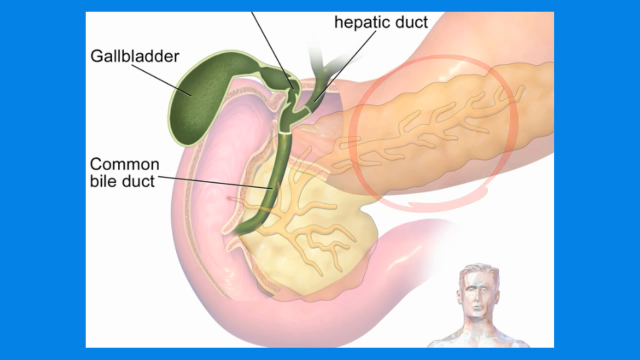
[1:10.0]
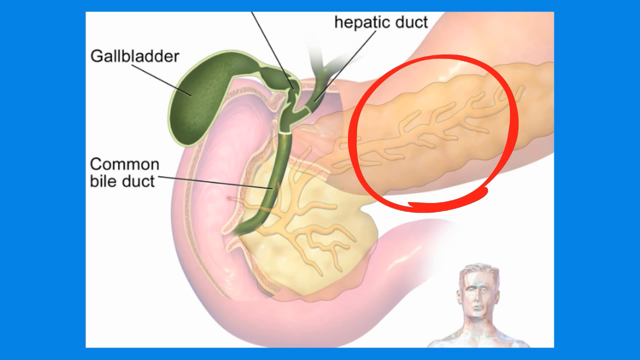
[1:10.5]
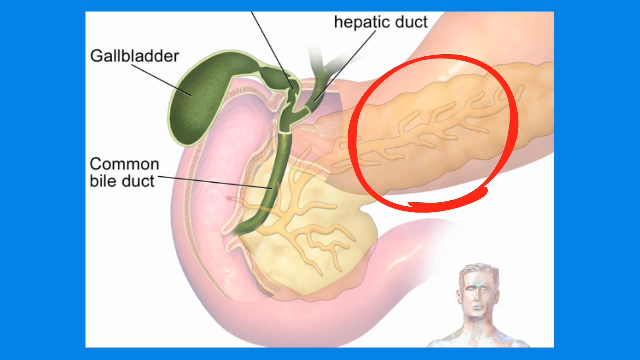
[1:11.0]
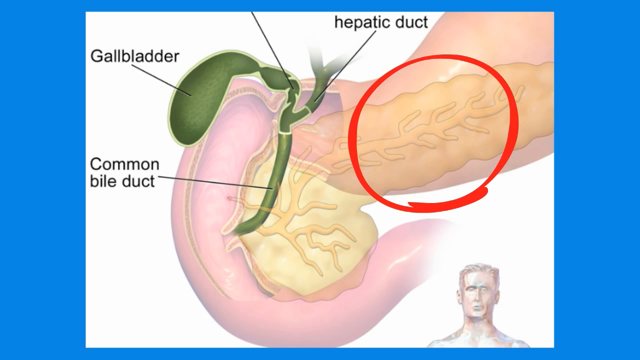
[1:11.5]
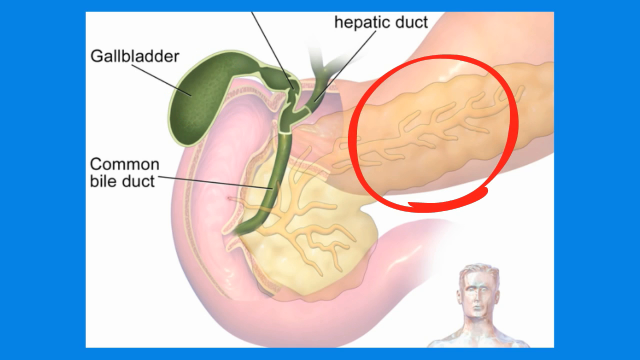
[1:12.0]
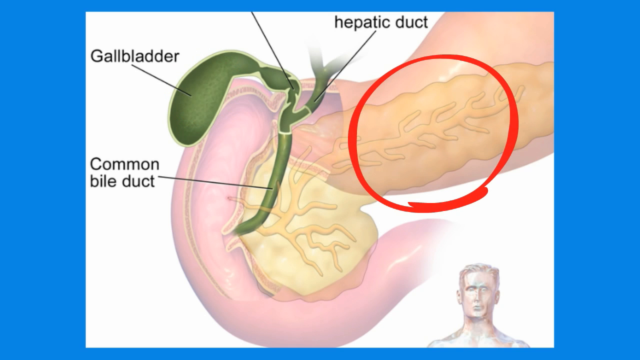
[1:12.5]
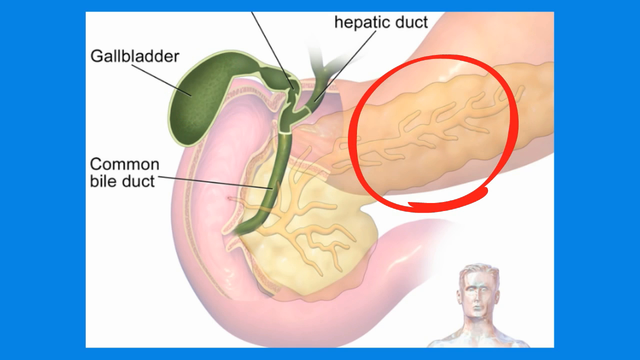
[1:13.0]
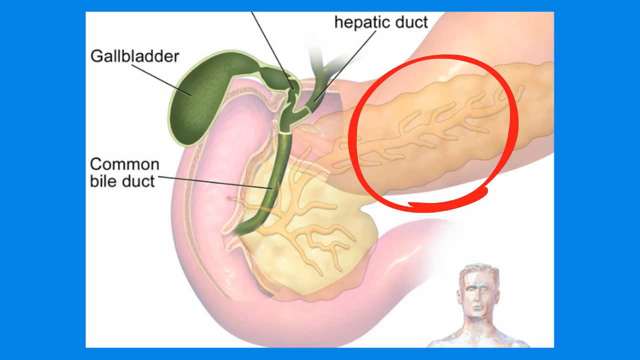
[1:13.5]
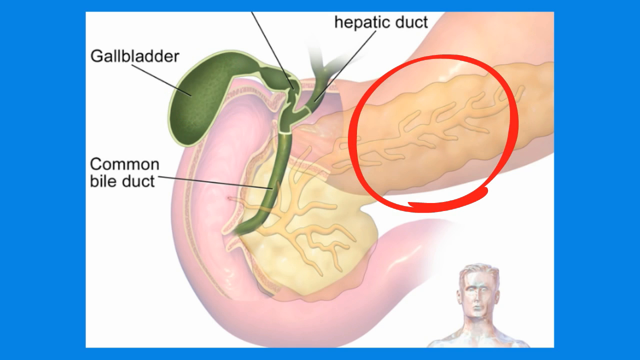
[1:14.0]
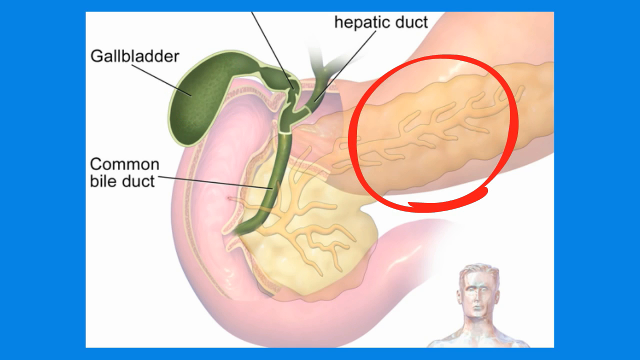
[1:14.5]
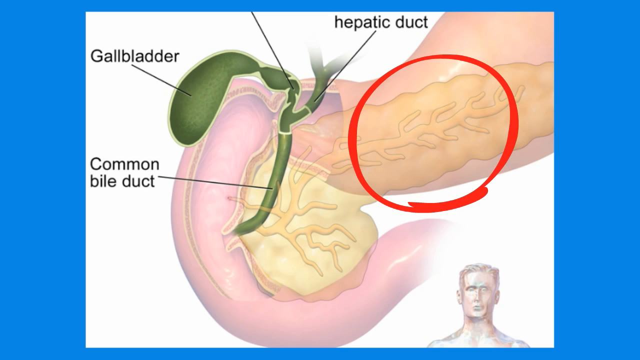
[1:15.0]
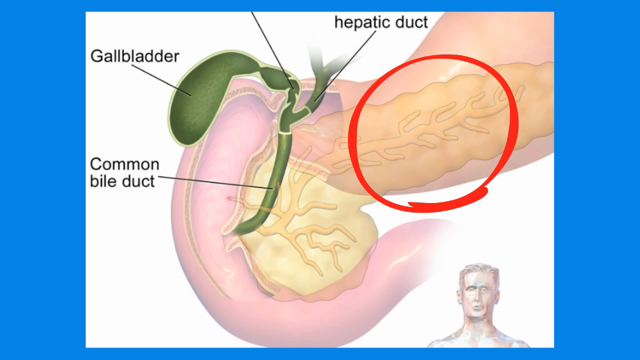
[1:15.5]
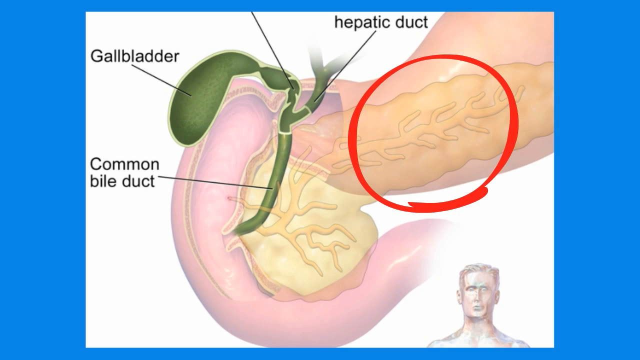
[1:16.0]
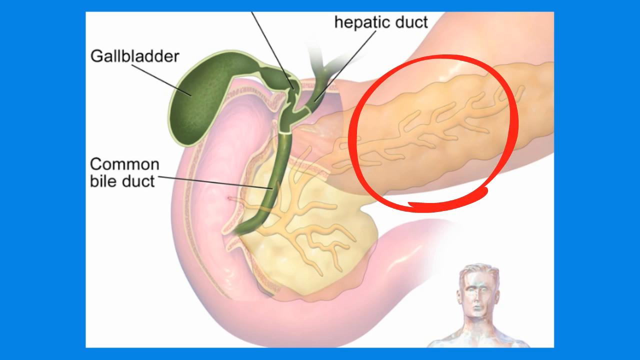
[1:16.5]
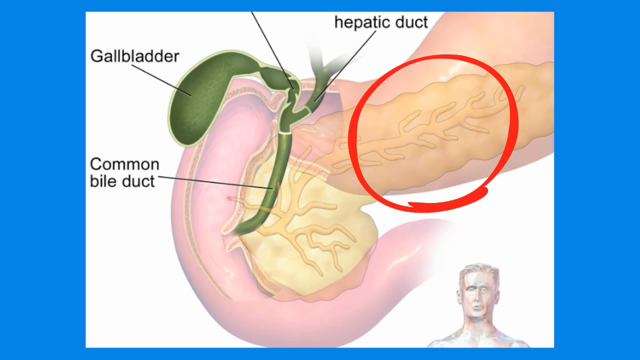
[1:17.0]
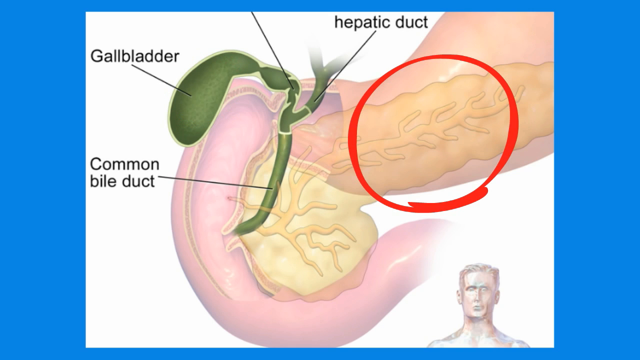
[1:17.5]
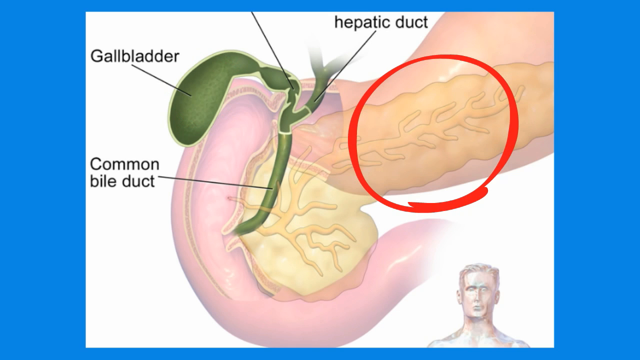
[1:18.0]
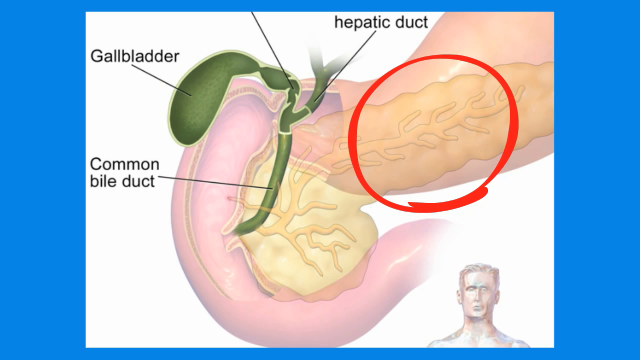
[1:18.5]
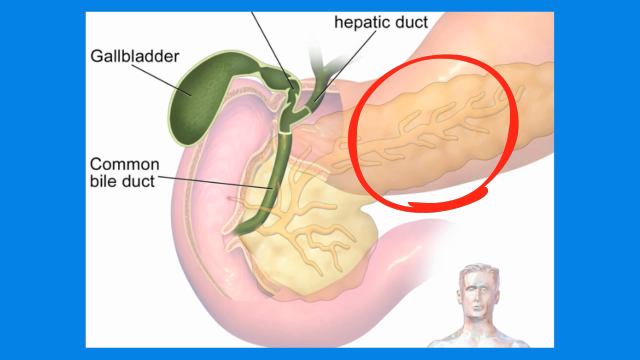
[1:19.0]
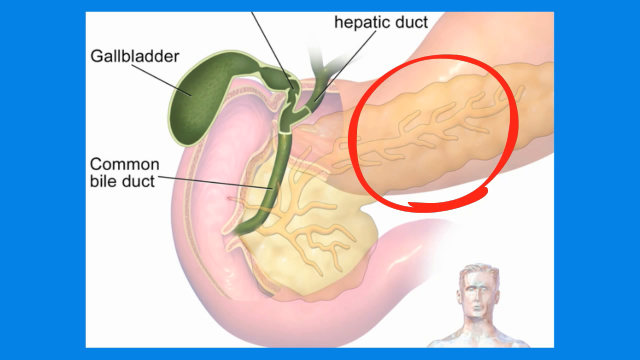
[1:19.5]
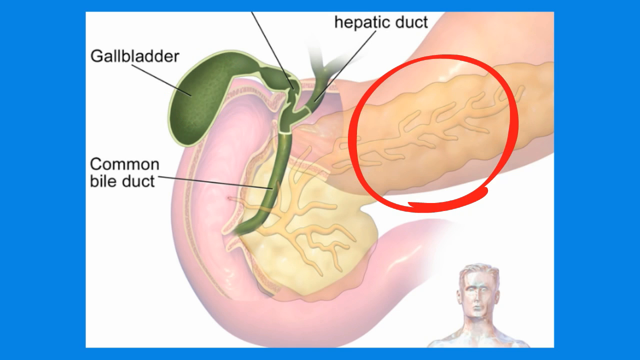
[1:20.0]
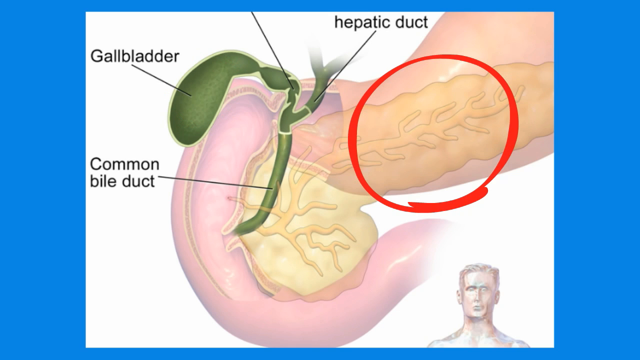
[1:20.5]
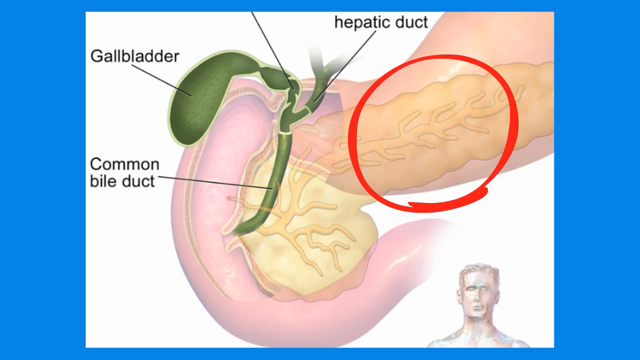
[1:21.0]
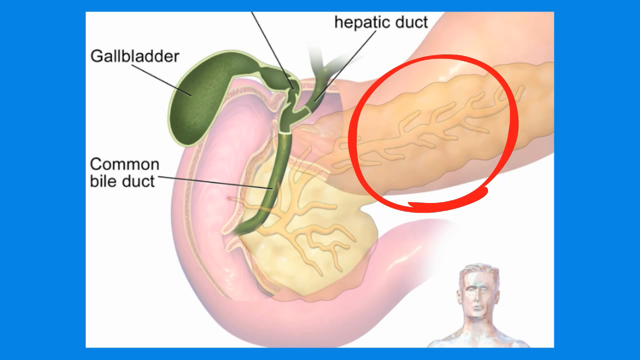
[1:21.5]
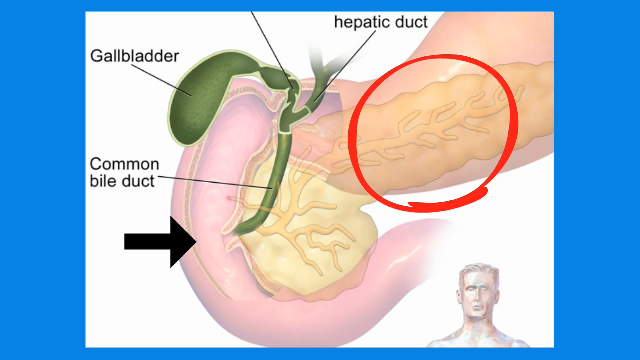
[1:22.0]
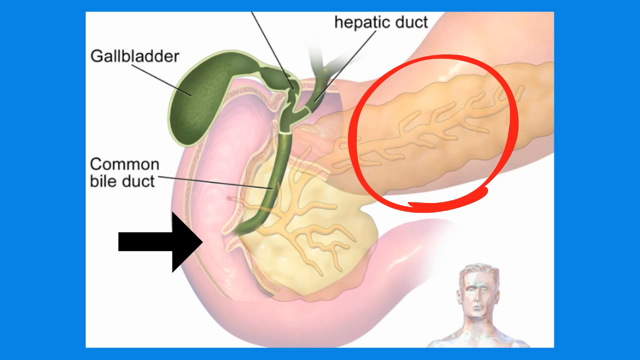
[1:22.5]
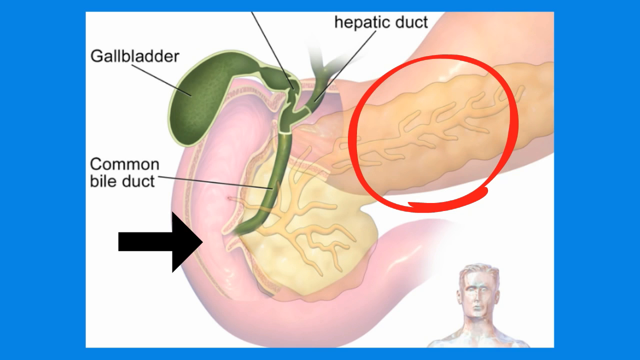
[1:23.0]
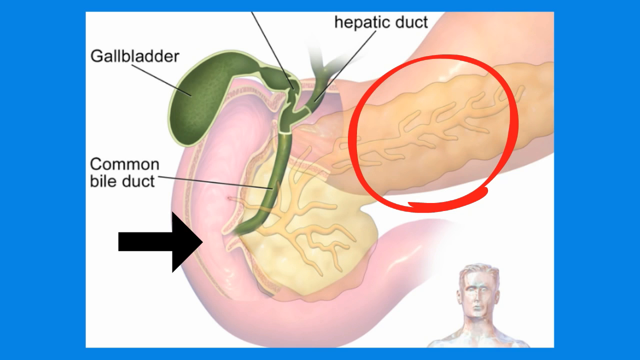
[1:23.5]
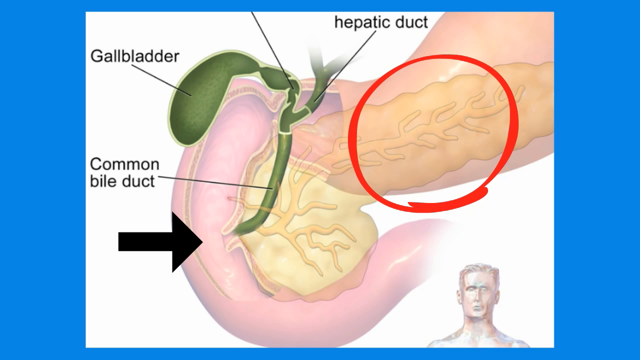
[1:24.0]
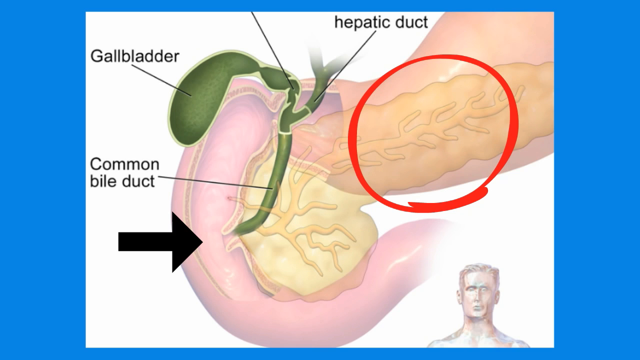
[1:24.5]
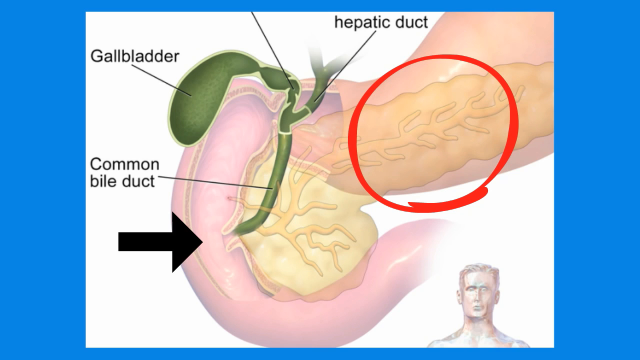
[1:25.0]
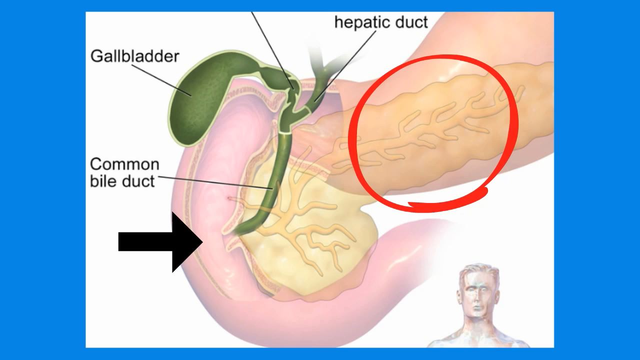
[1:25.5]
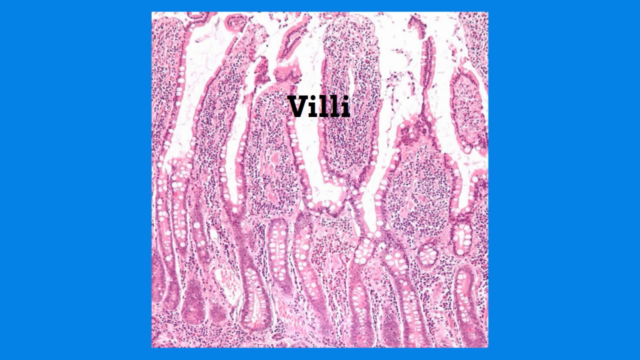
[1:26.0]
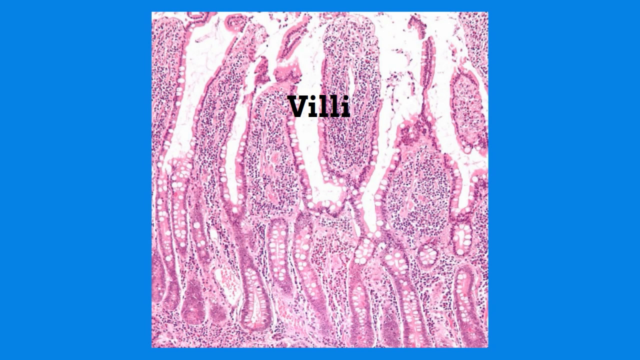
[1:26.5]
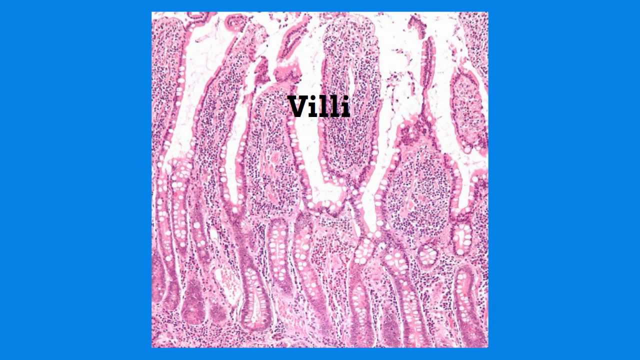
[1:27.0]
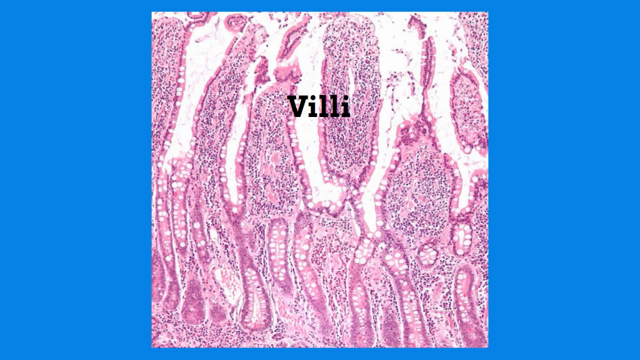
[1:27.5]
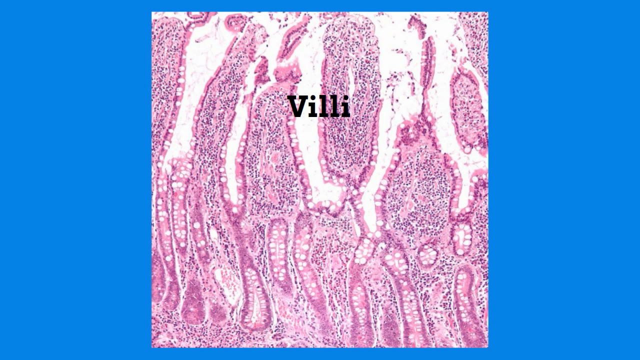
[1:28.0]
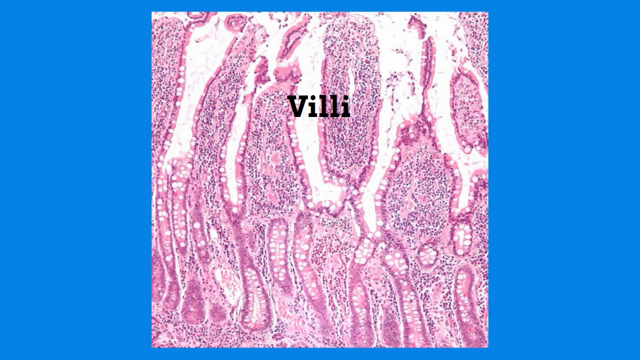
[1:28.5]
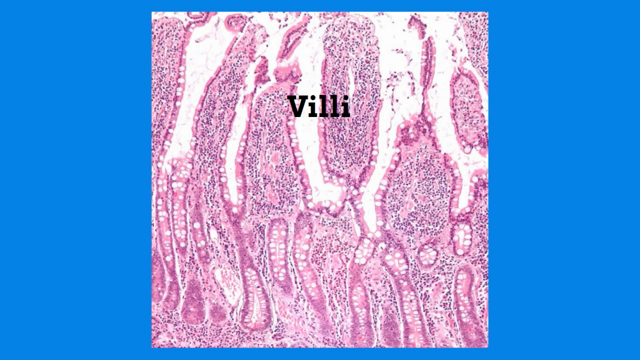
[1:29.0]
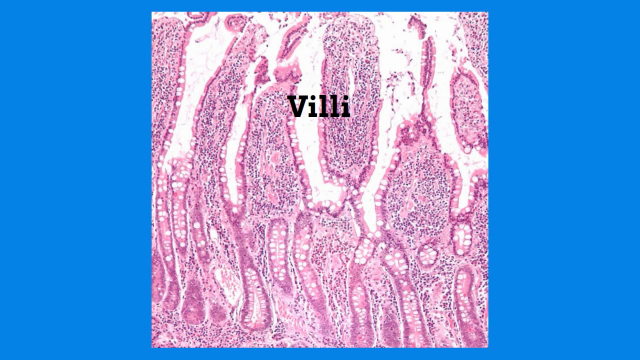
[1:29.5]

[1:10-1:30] A rectangular illustration with a blue background is at the center of the screen. A red circle appears at a precise point of the illustration, and at the bottom right of the illustration there is the figure of a man. After a few seconds, a rather large black arrow appears on the left side of the image, pointing to the left end of the organ. The image has black writings naming specific points of the illustration through black segments. Then another image appears with black writing in the upper central part that says "Billy". This image is mainly pink, white and magenta, and like the earlier images it is quadrangular and placed on a blue background.